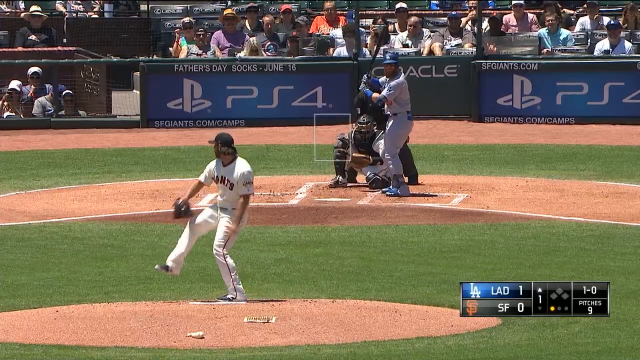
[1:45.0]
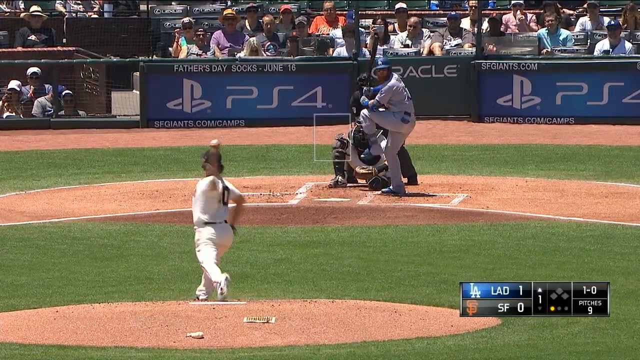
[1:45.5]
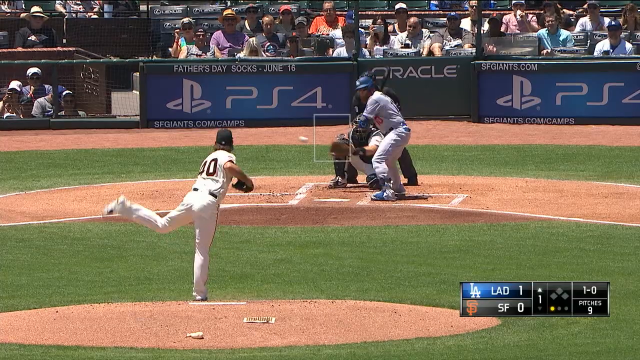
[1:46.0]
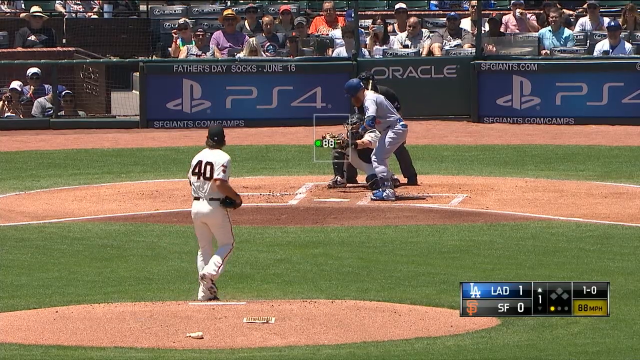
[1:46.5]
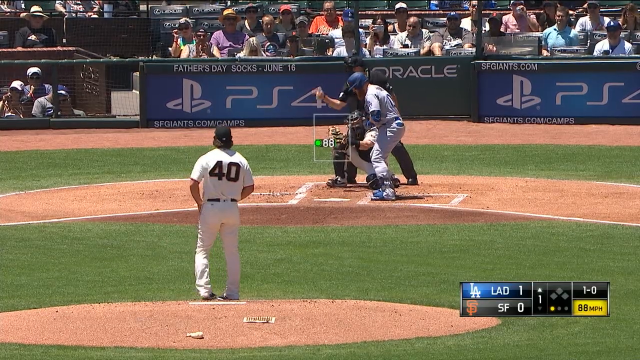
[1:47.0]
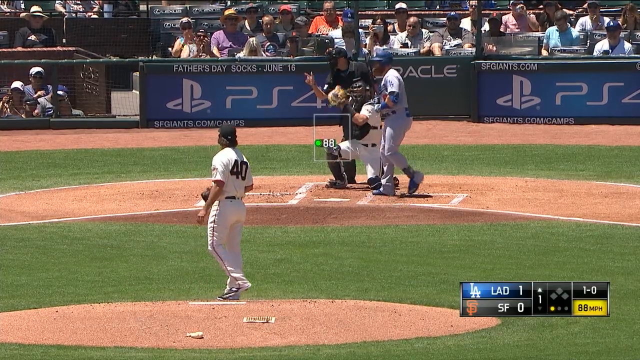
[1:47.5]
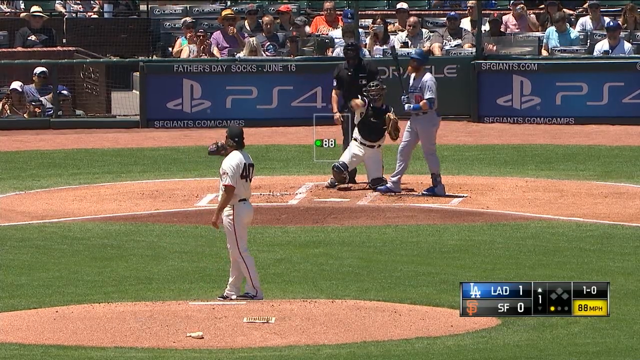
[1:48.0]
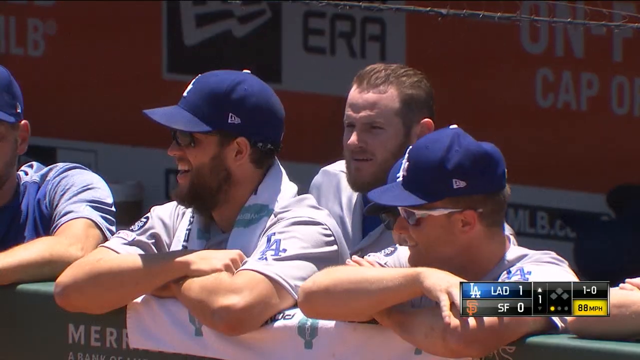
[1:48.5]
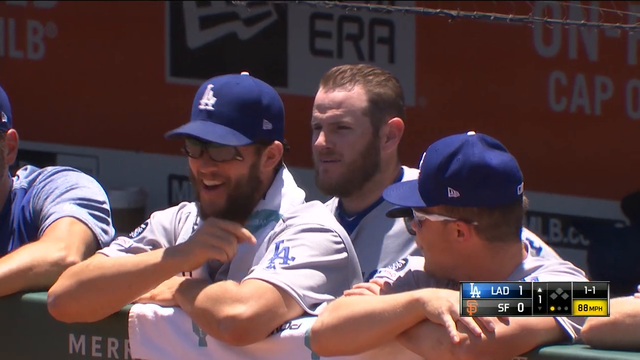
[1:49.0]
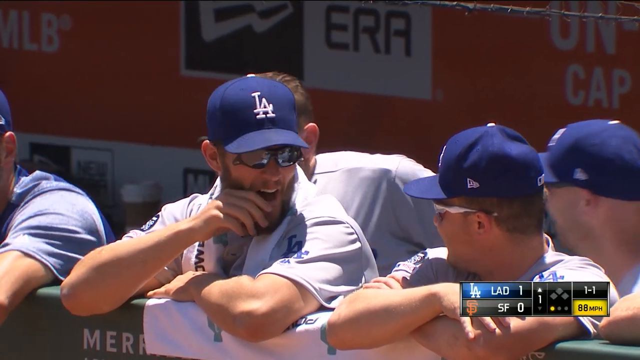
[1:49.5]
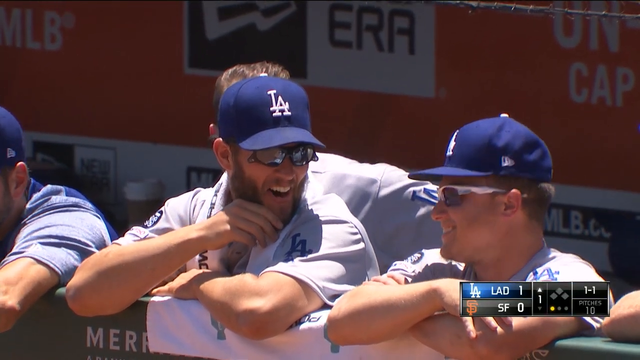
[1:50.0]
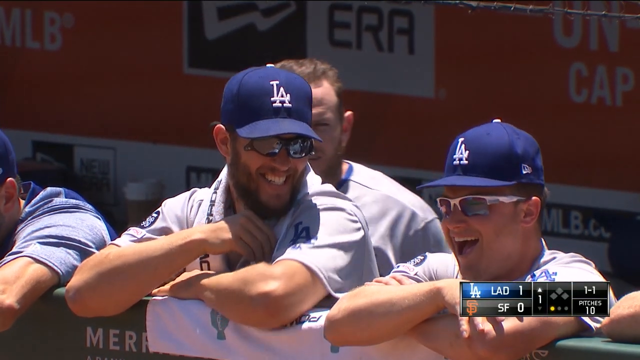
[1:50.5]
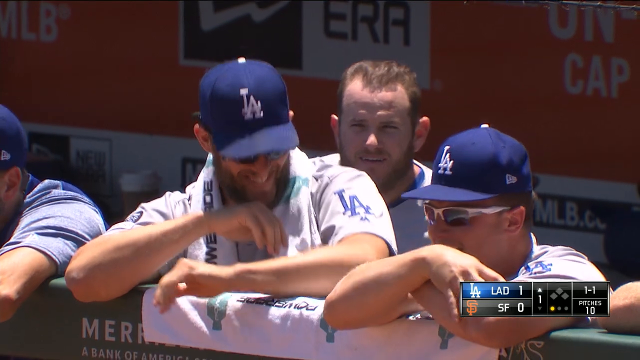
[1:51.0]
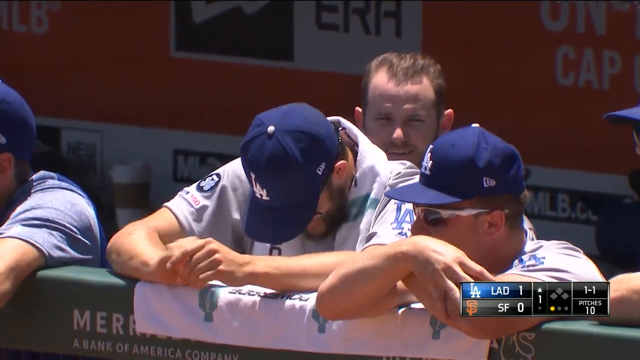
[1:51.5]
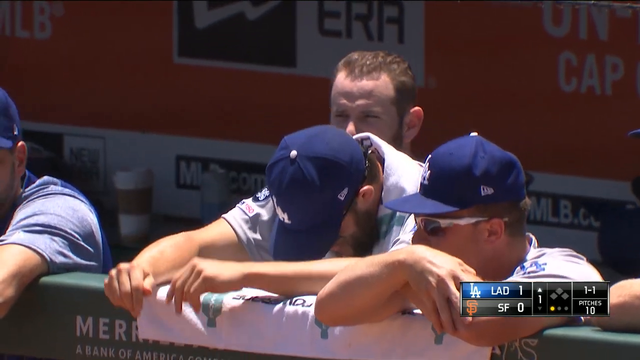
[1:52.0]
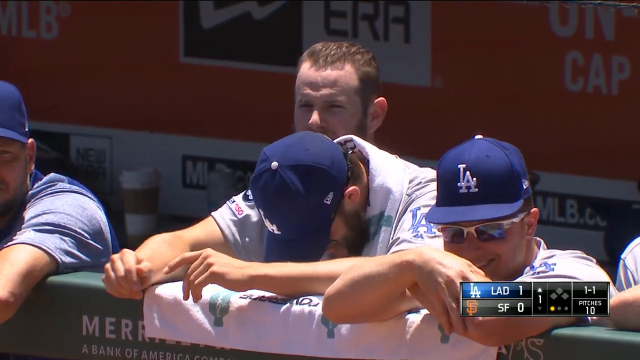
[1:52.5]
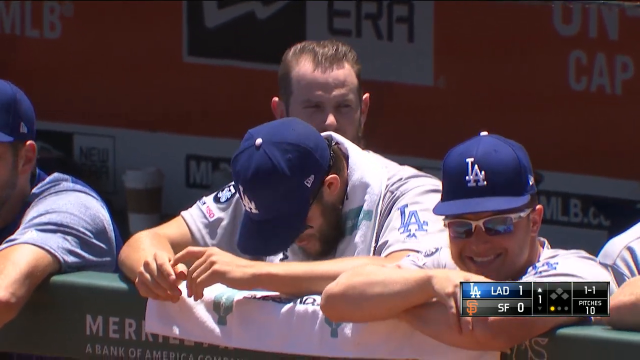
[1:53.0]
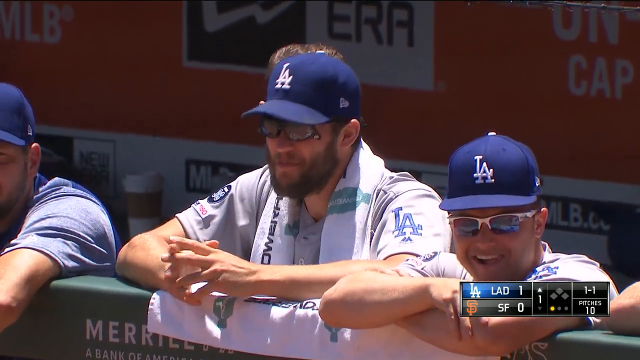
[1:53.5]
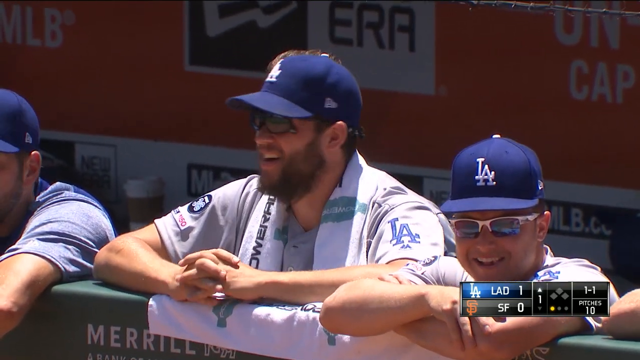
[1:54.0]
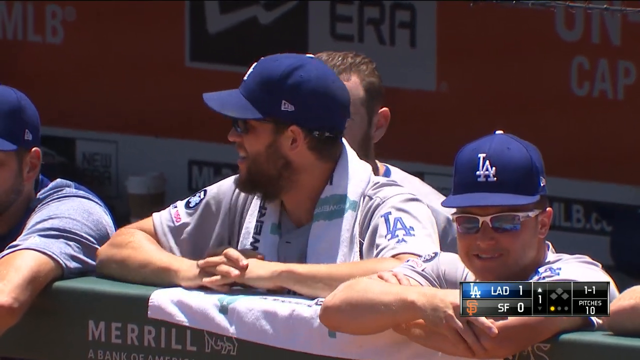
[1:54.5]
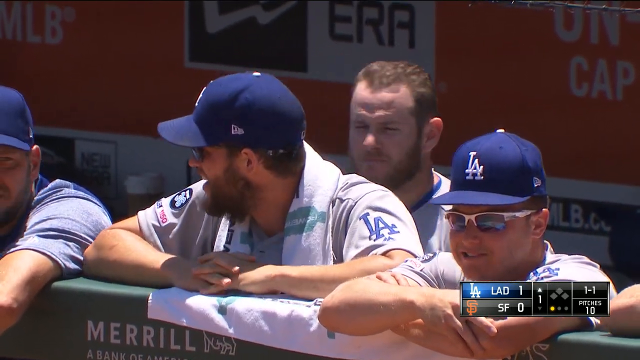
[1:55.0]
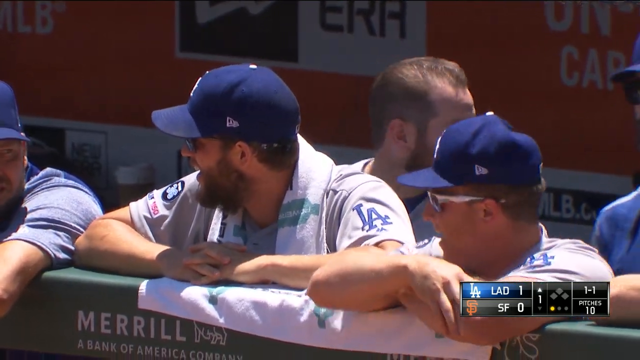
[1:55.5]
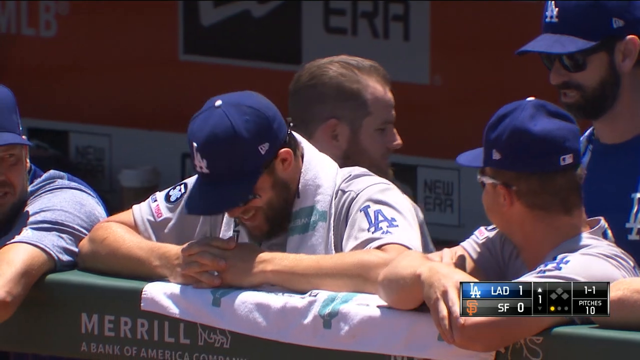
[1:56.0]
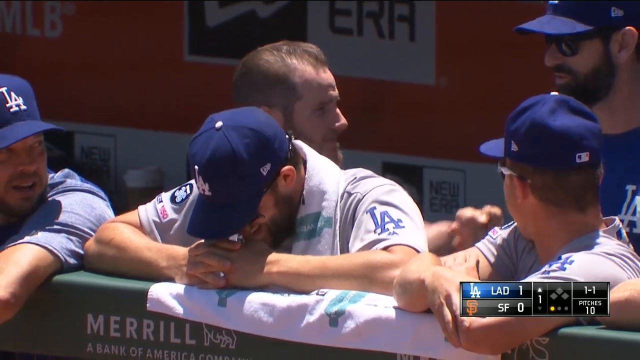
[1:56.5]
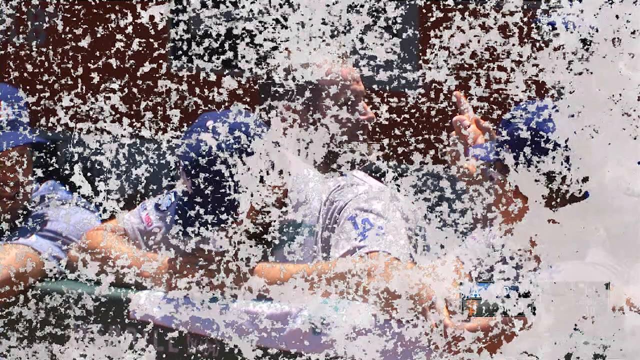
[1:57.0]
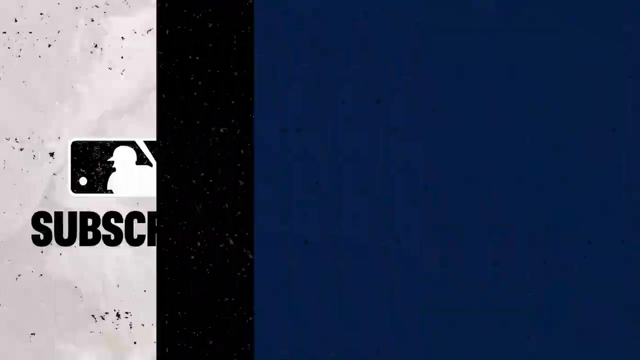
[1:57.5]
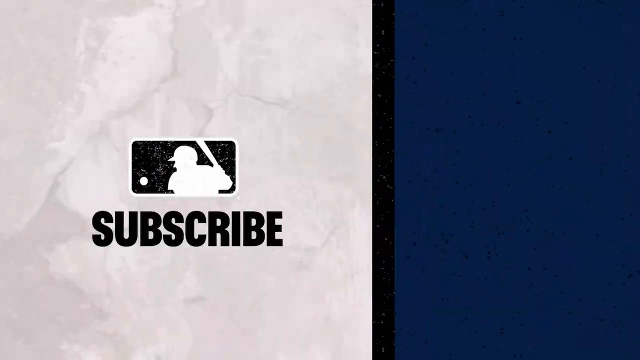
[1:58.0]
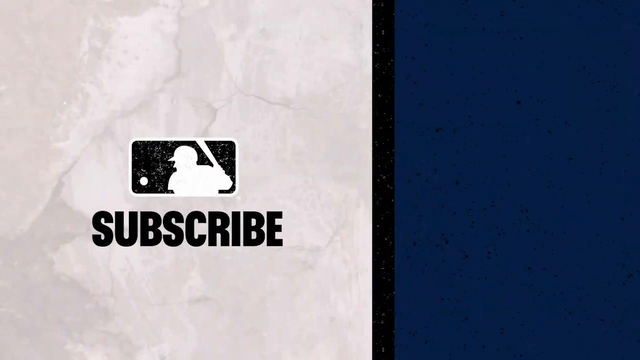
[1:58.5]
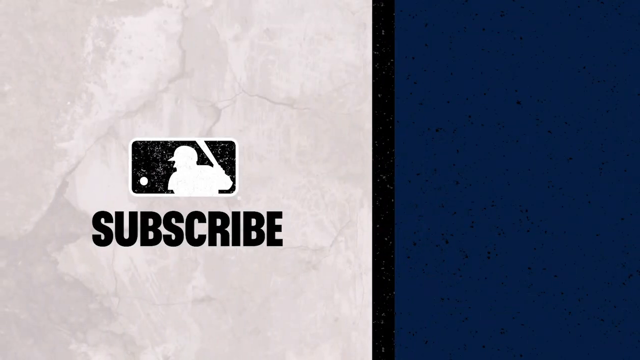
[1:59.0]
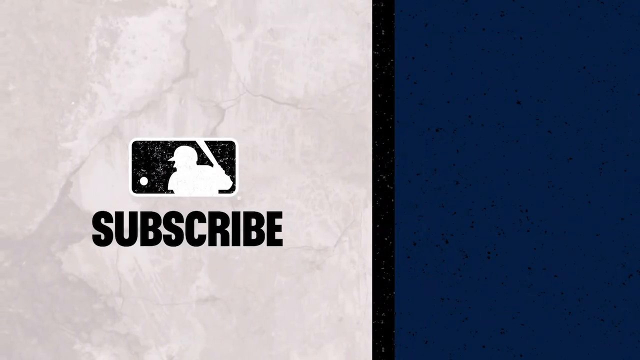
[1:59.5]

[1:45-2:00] Number 40 pitches and a batter bats. Then Max, with his batting helmet off, talks to other team members just outside the dugout. The players are mostly wearing blue cloth caps with LA on them, while number 13, Max, wears no hat at all. The score is still LA 1, San Francisco 0. The video then ends with "subscribe" shown.